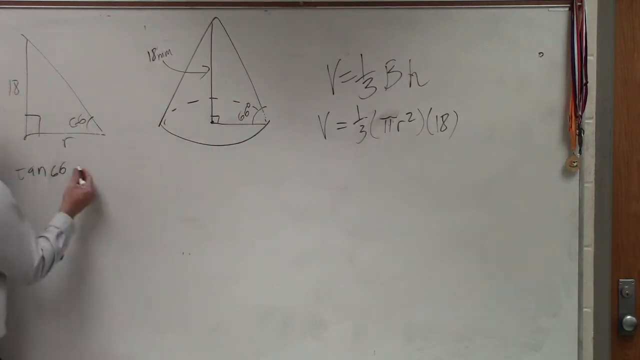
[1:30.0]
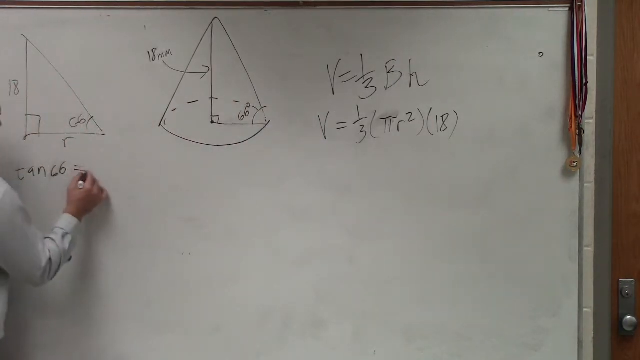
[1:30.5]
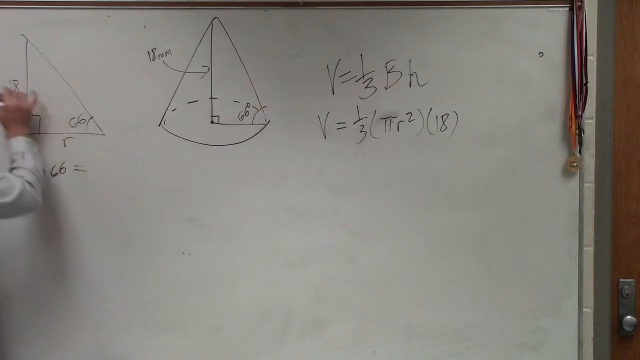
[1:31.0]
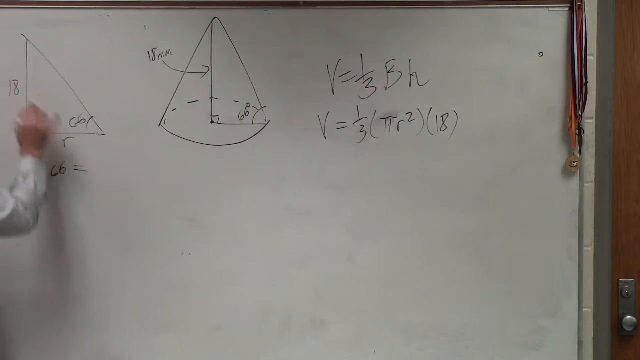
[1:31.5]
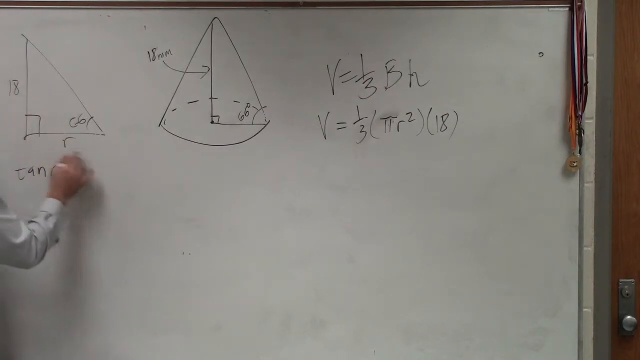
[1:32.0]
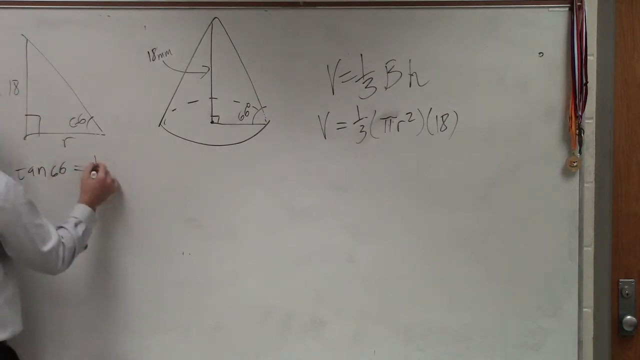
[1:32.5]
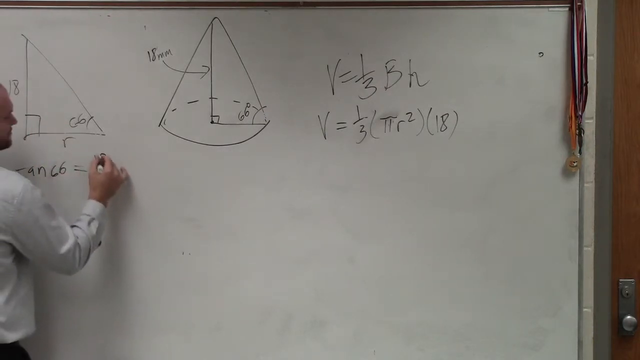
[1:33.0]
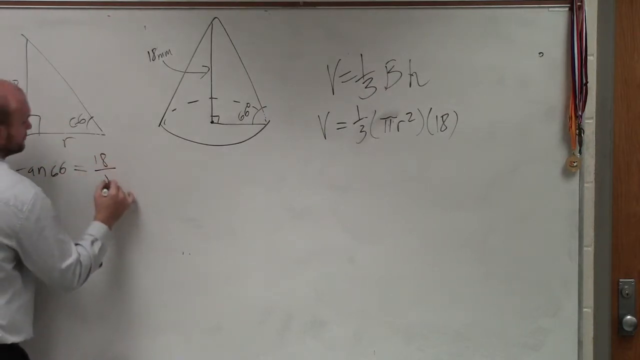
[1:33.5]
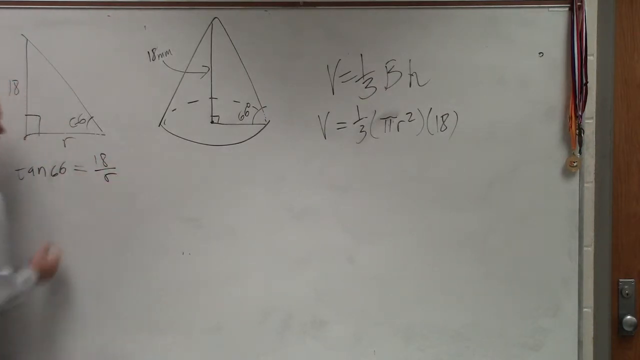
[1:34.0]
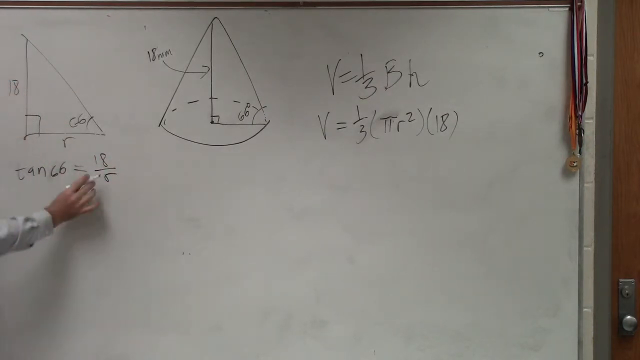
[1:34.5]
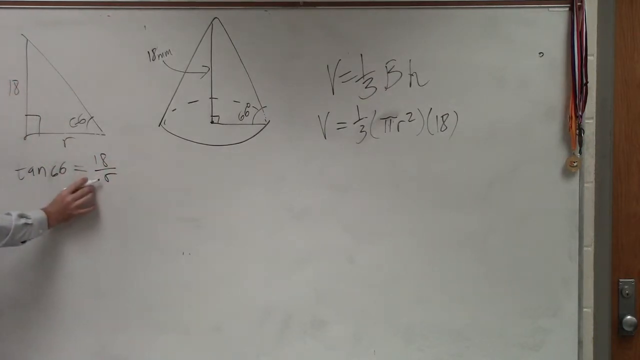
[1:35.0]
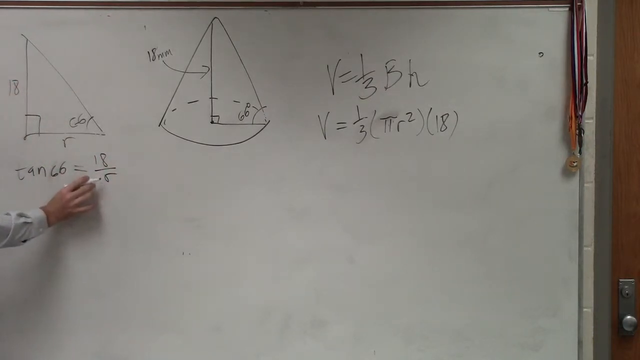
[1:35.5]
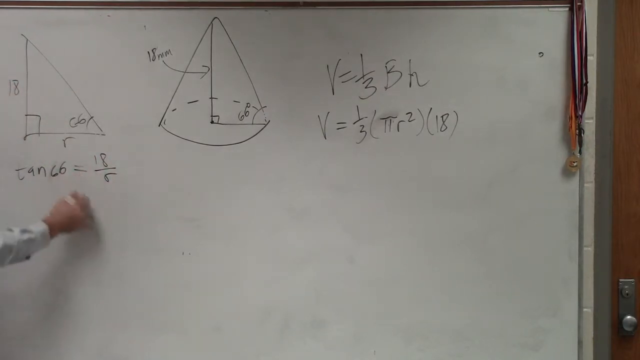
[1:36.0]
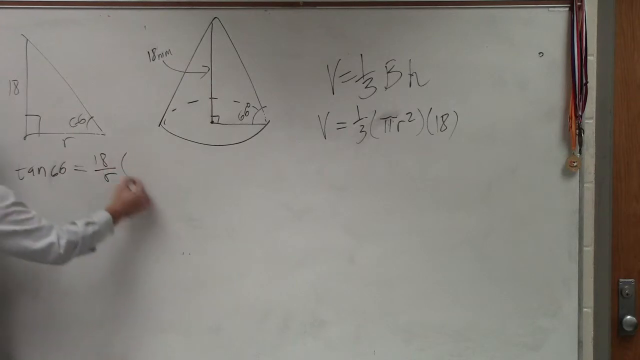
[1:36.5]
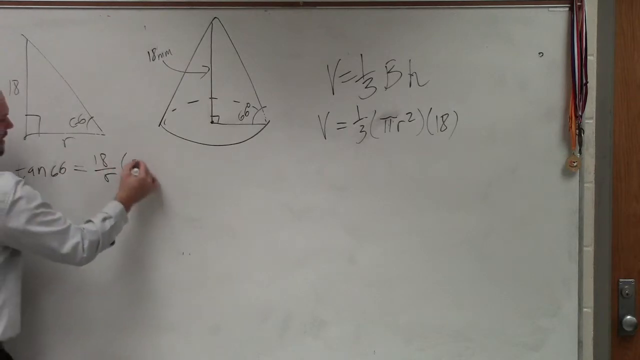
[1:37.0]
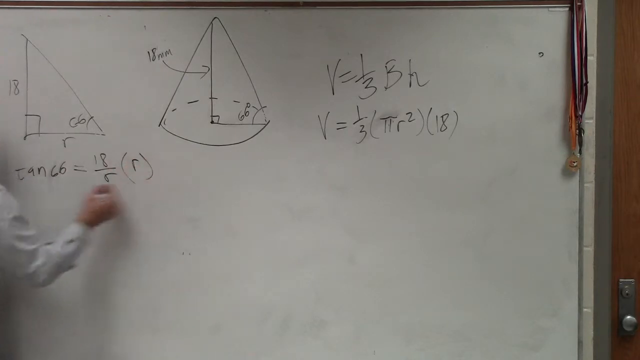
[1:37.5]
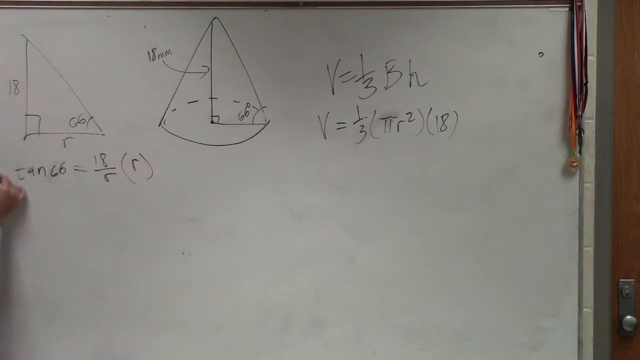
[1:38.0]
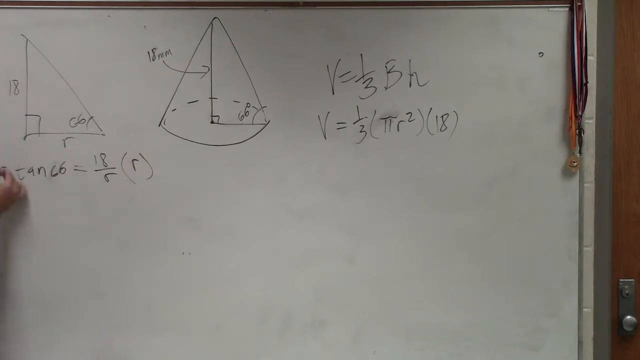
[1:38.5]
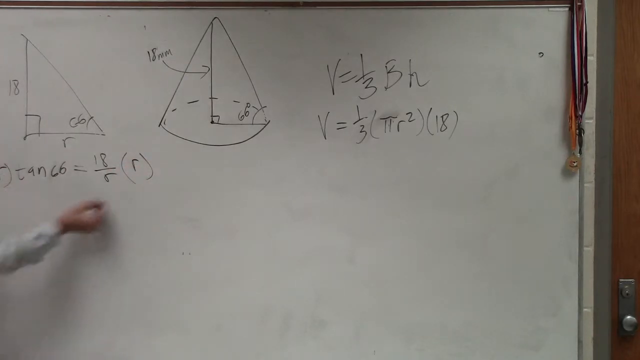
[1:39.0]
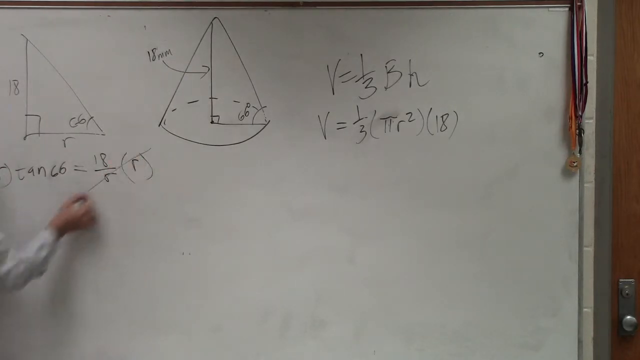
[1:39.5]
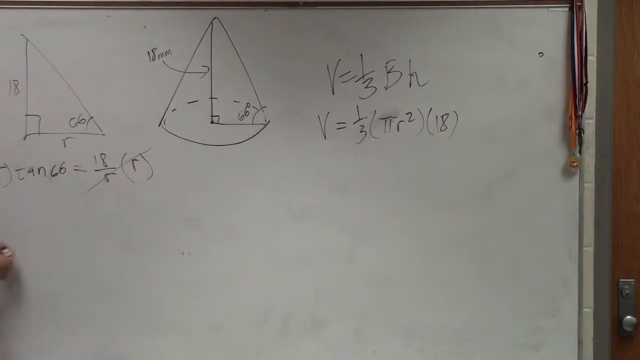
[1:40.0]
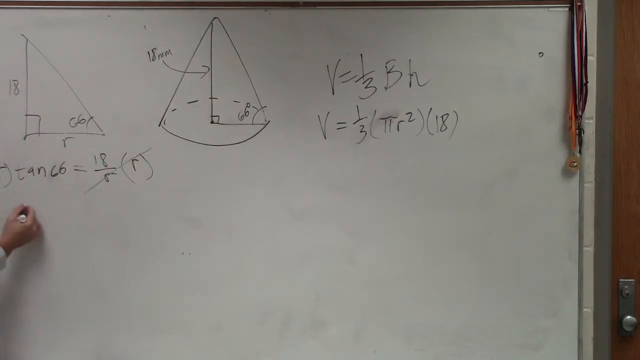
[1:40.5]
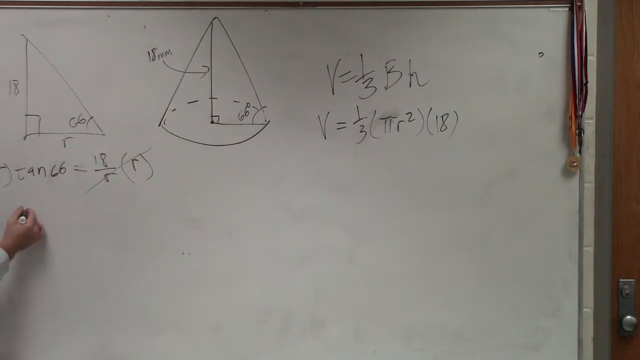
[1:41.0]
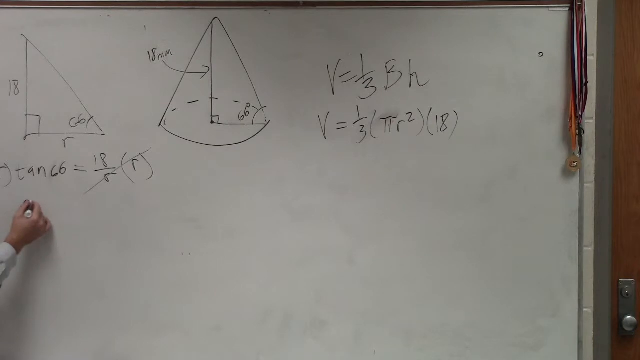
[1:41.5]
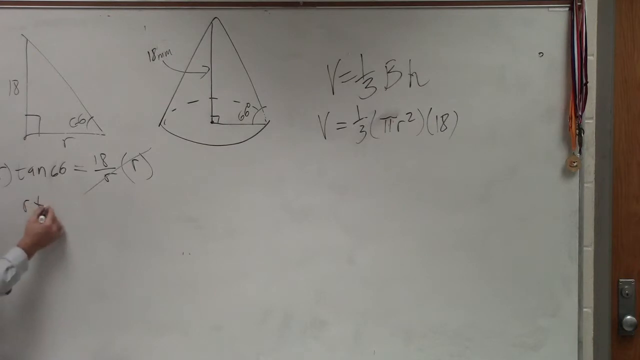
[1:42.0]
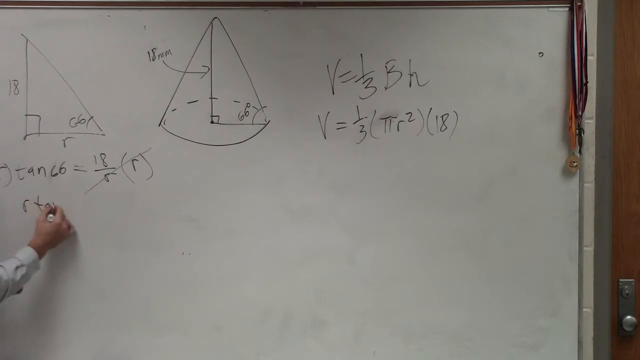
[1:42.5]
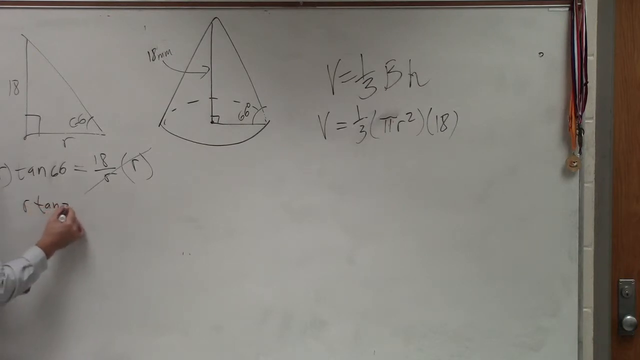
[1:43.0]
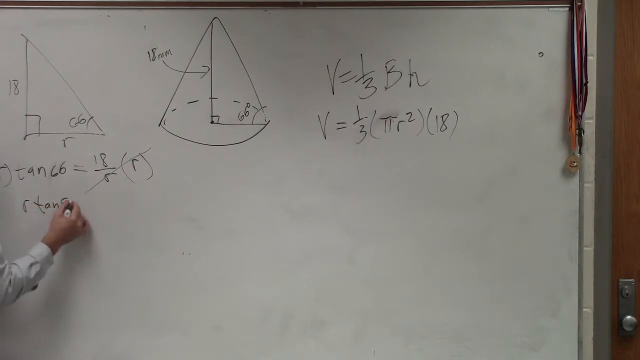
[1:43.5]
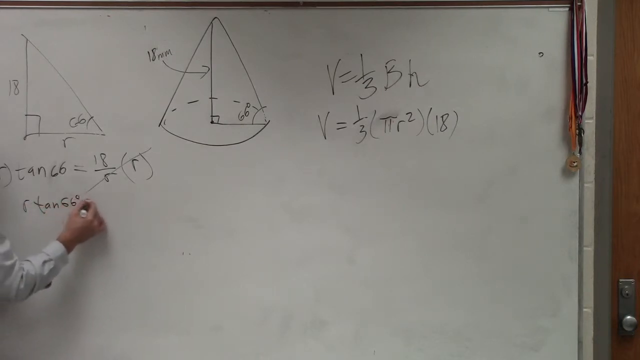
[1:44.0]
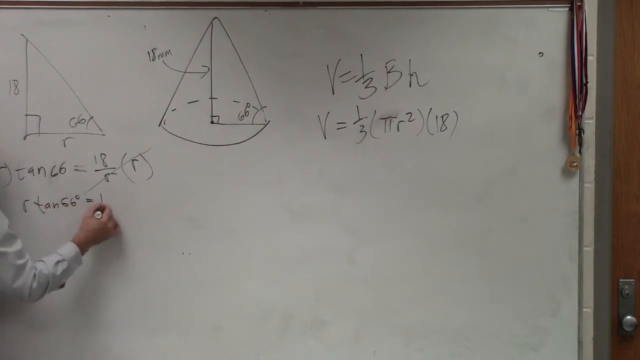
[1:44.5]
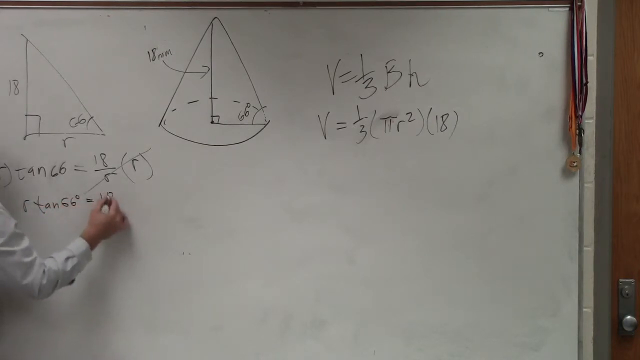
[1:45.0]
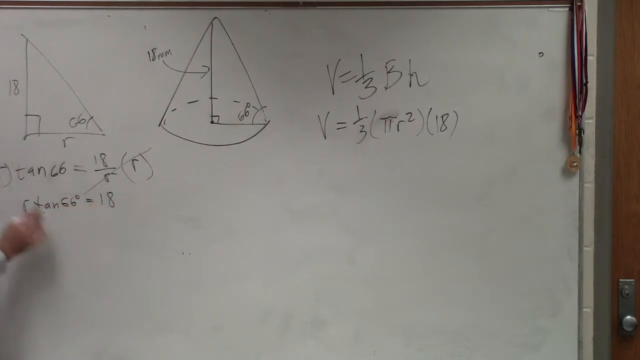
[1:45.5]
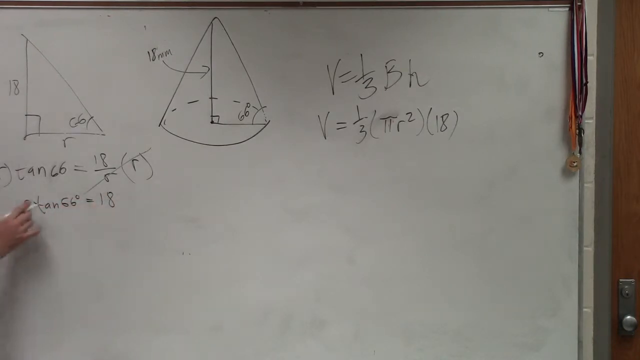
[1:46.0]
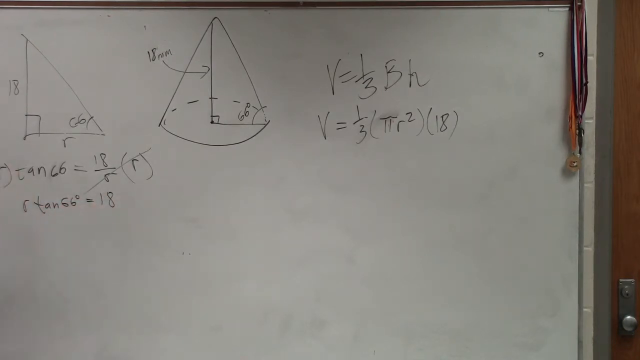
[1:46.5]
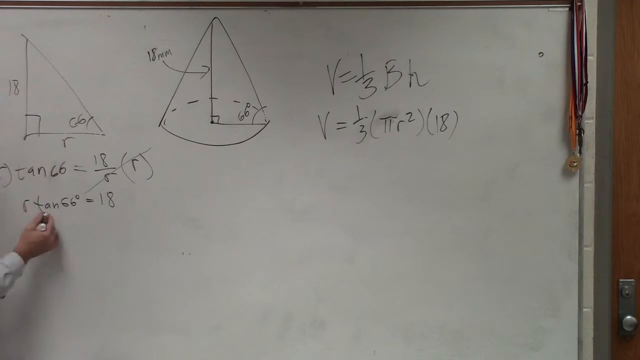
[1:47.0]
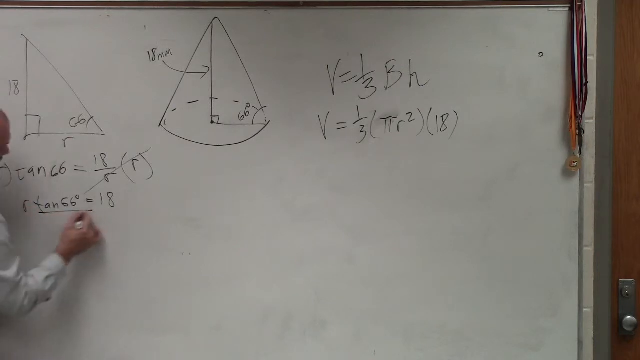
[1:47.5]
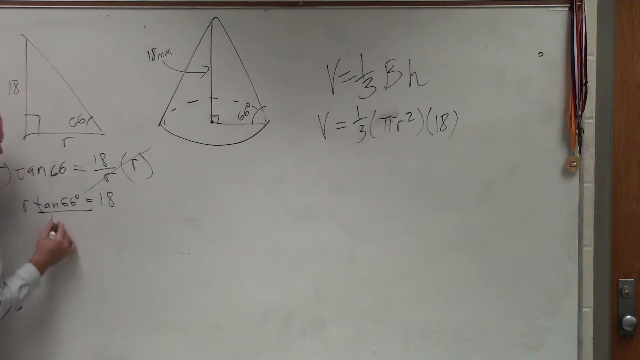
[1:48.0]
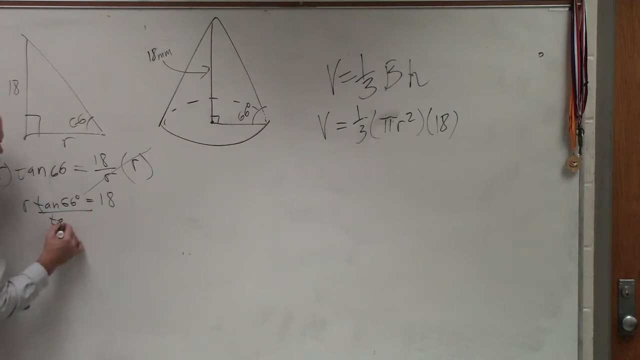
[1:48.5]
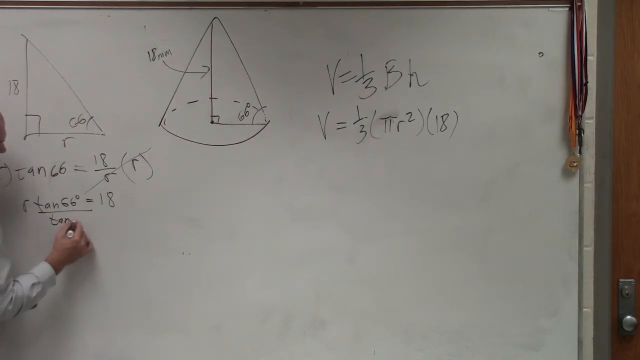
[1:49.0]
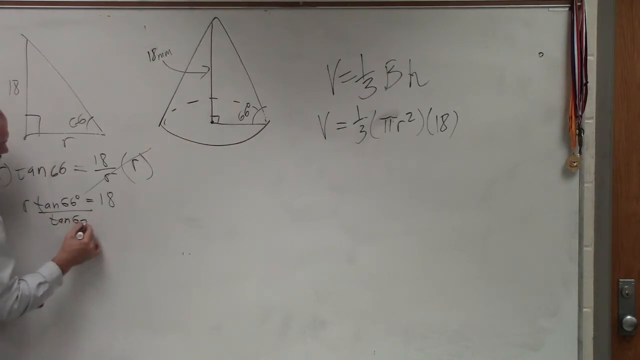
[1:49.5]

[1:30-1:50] On the left-hand side of the whiteboard he has written tan 66 equals 18 over 6, with R in parentheses, has crossed through the 18 over 6 R, and has written R tan 66 degrees underneath. Writing with his right hand, he adds R tan 66 degrees equals 18, a line under that, and tan 66 degrees below it. While he writes he is seen only a little in profile, mostly as his right arm, and sometimes only his right hand is visible on the board. All of the work is now visible from the beginning, along with the diagram. He gestures with his right hand to different parts of the triangle as he writes underneath it, and he is speaking. His shirt has cuffs, and he may be wearing a watch, though it is difficult to see. He is still writing with the black marker.